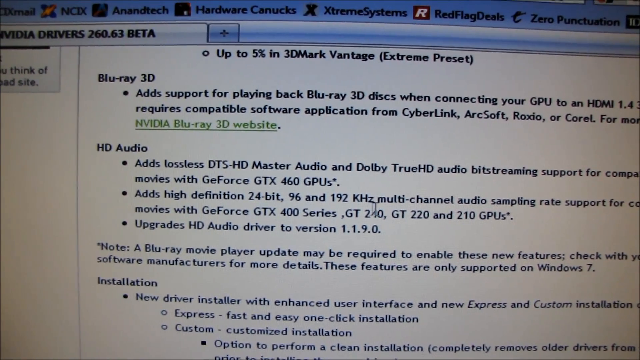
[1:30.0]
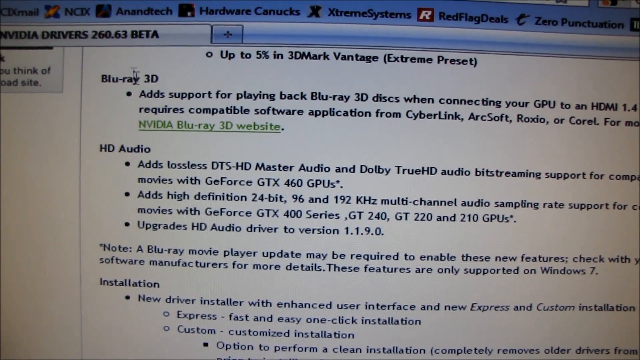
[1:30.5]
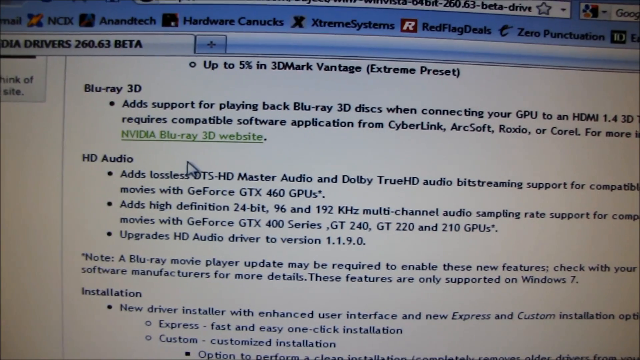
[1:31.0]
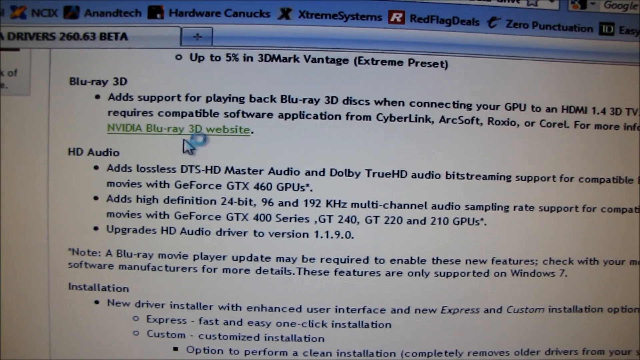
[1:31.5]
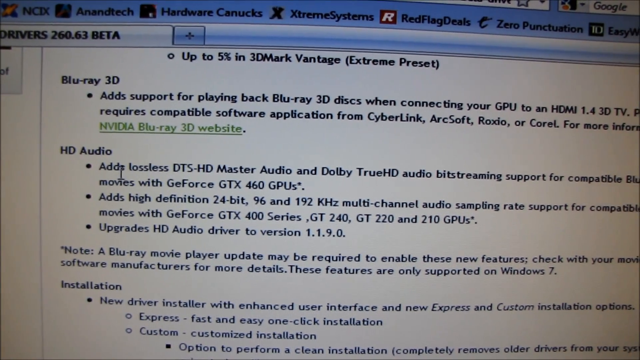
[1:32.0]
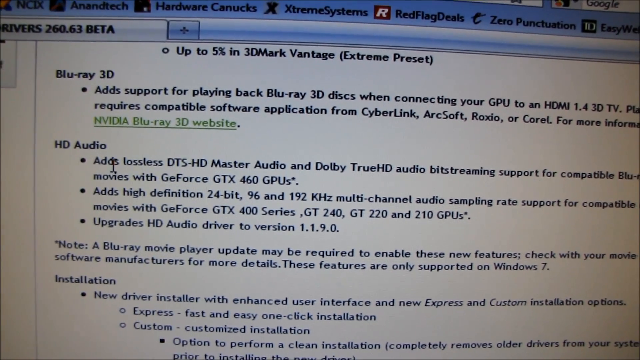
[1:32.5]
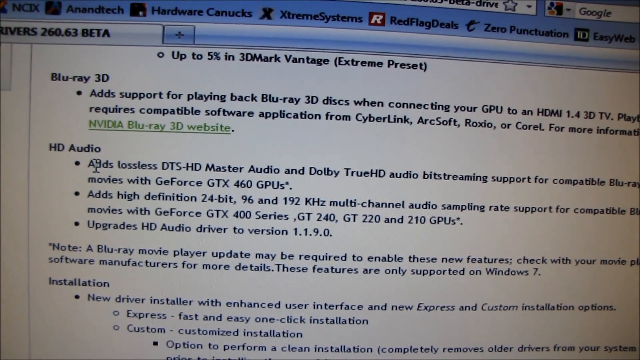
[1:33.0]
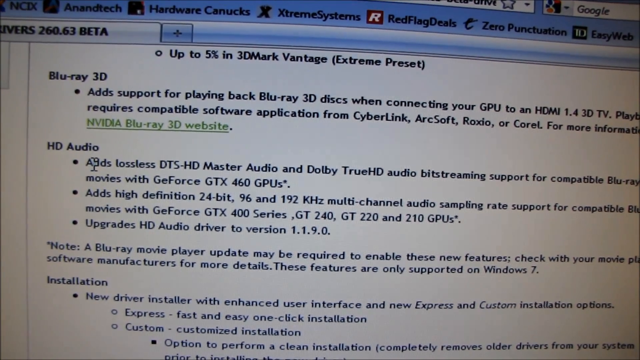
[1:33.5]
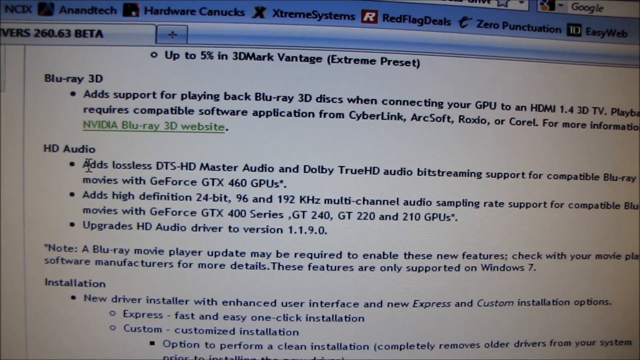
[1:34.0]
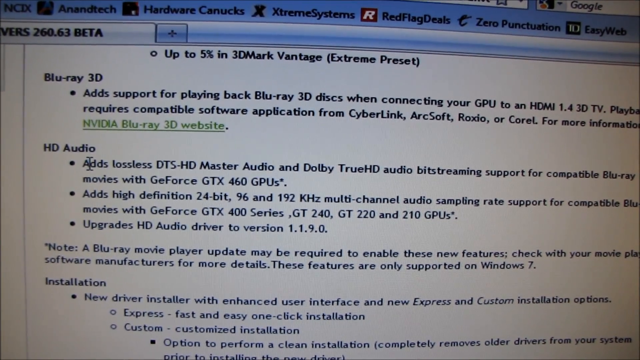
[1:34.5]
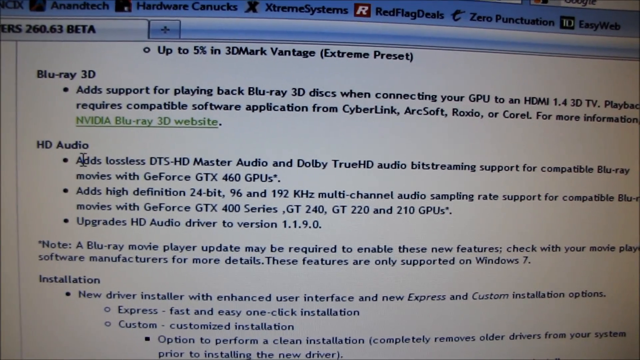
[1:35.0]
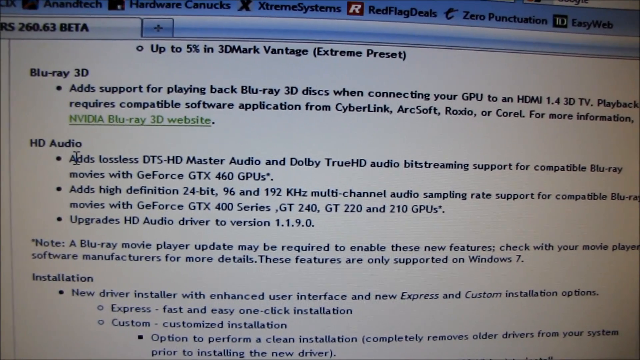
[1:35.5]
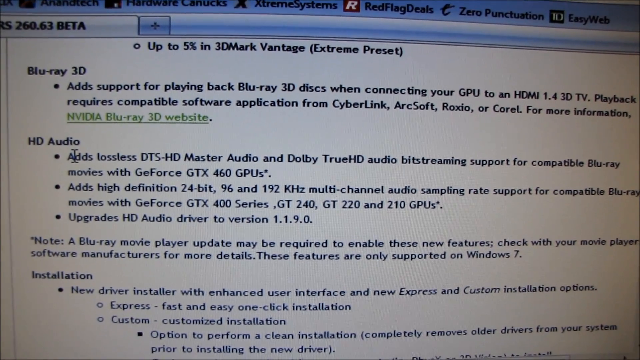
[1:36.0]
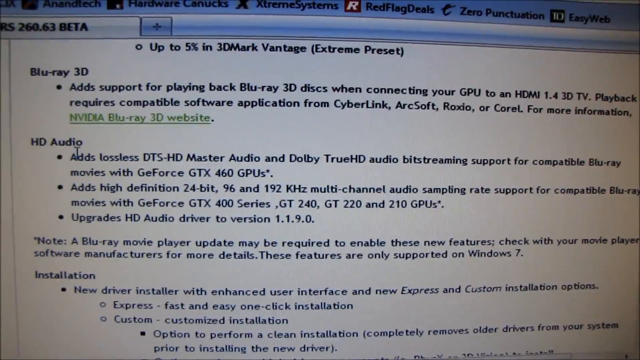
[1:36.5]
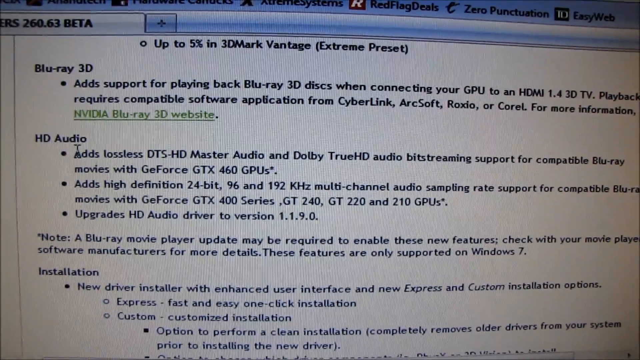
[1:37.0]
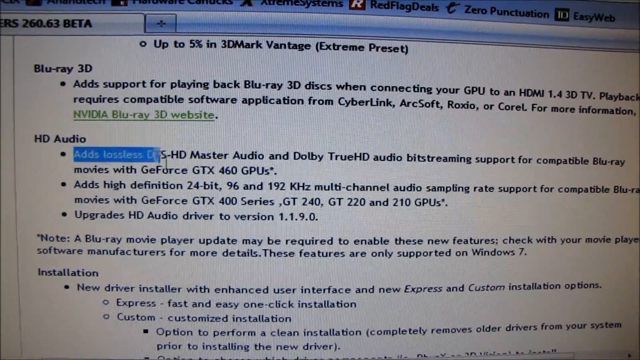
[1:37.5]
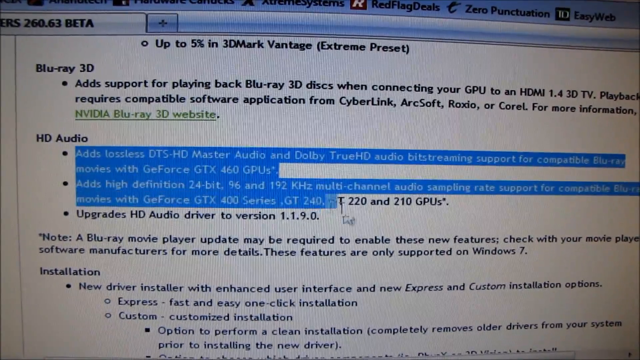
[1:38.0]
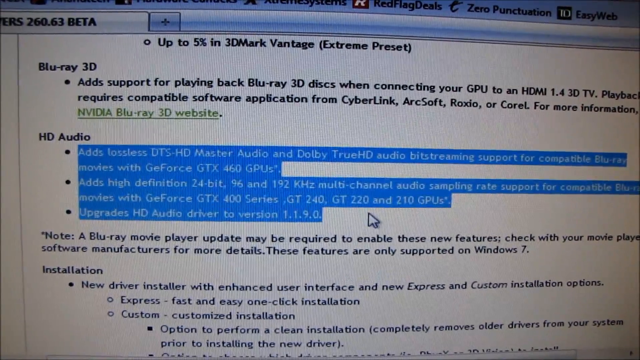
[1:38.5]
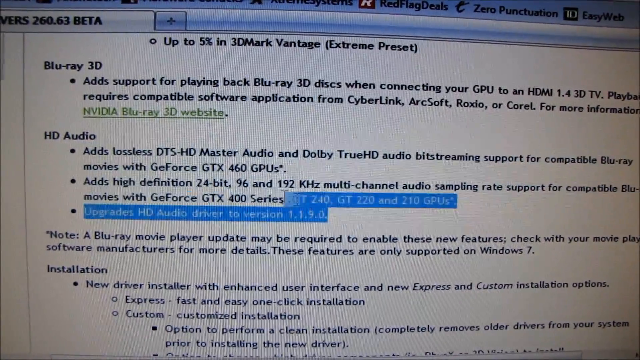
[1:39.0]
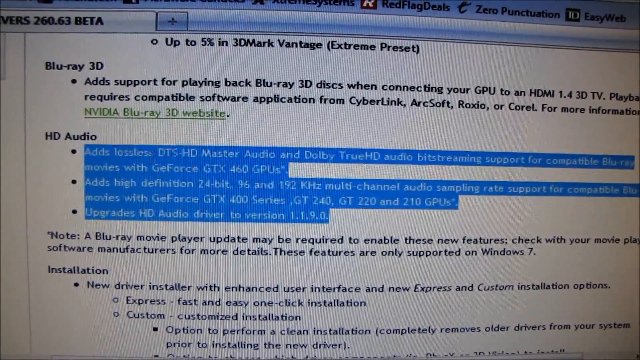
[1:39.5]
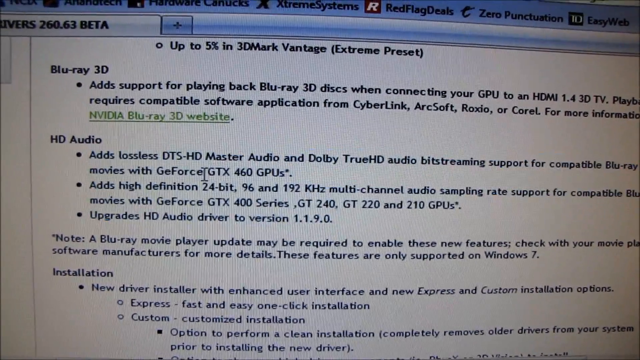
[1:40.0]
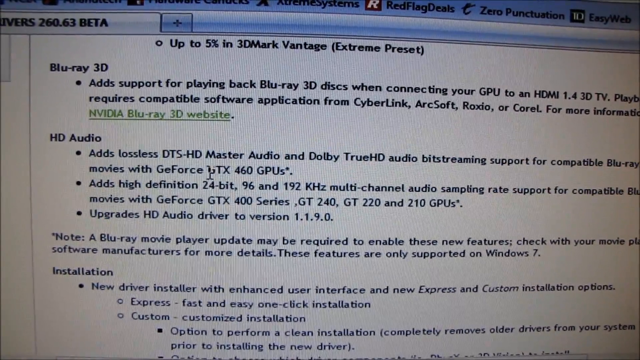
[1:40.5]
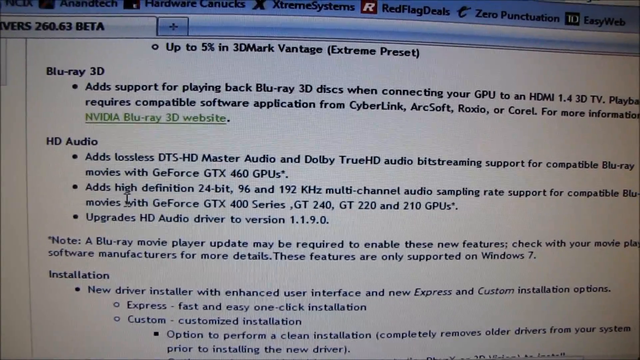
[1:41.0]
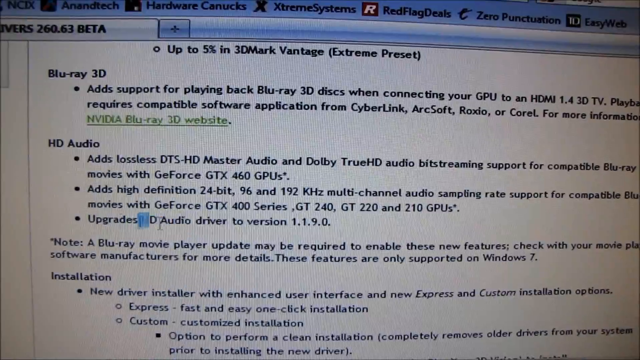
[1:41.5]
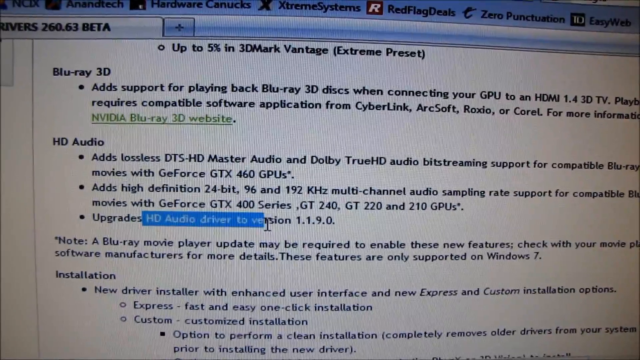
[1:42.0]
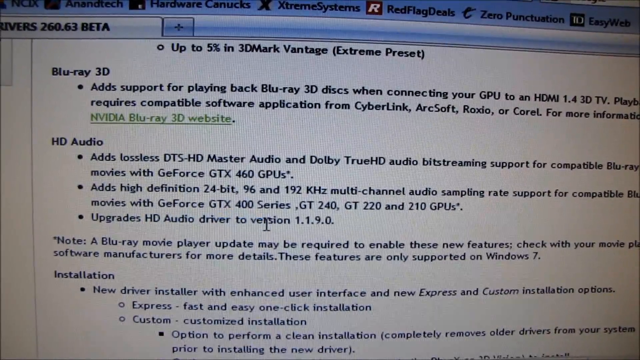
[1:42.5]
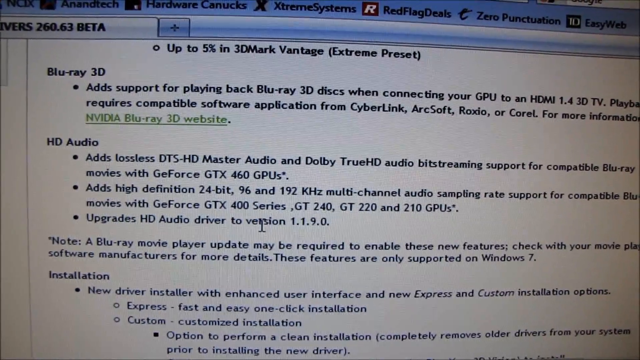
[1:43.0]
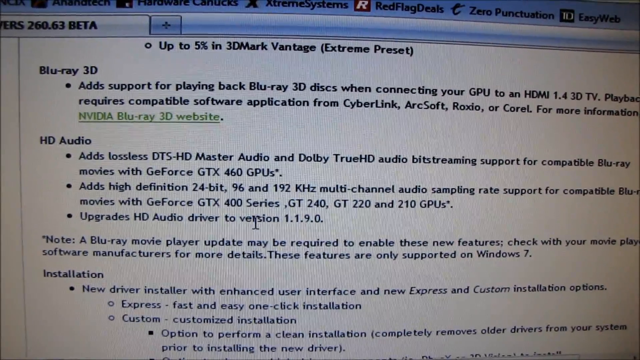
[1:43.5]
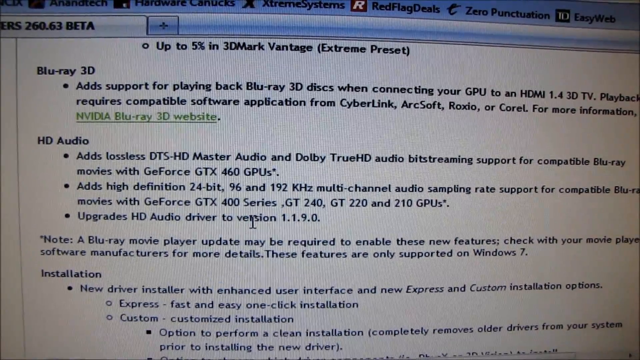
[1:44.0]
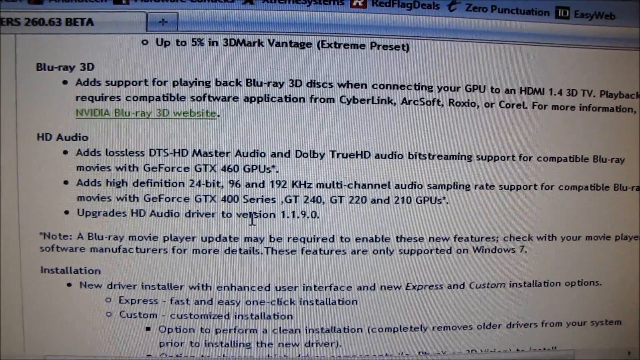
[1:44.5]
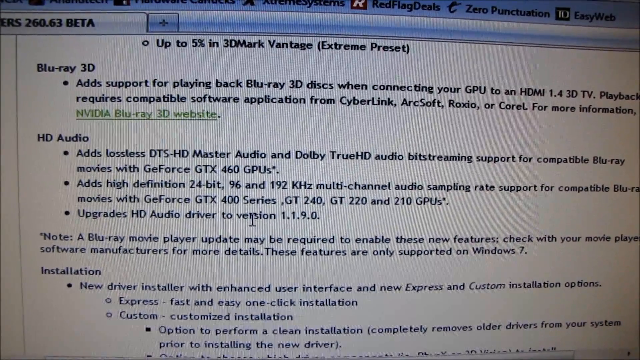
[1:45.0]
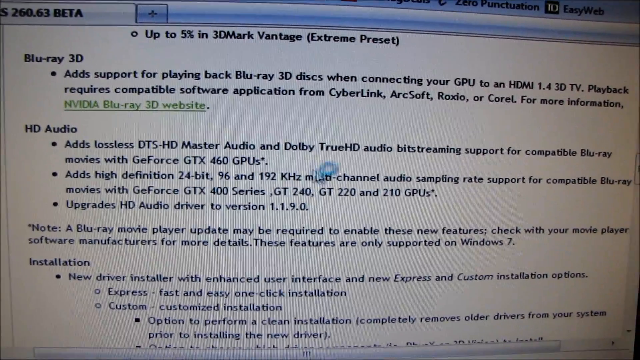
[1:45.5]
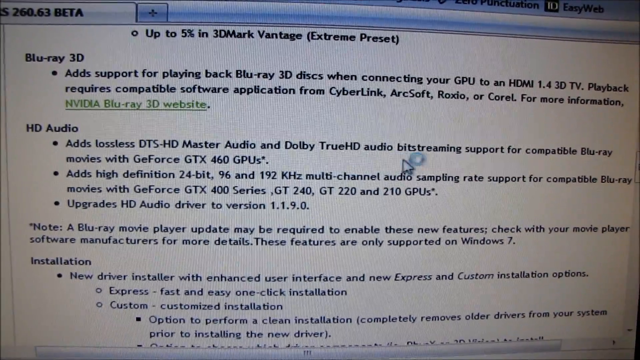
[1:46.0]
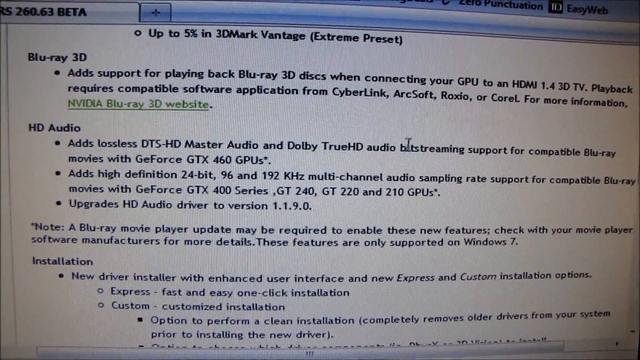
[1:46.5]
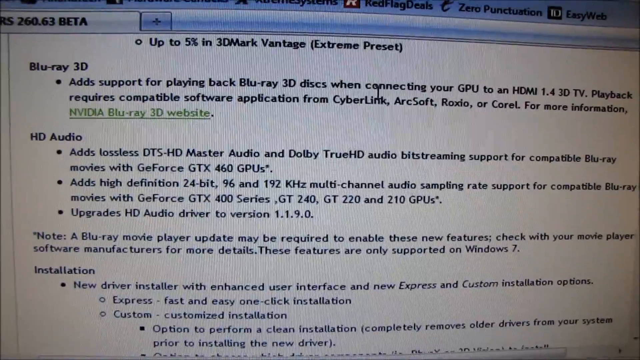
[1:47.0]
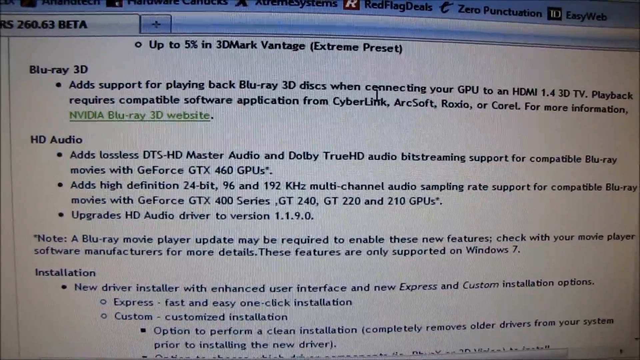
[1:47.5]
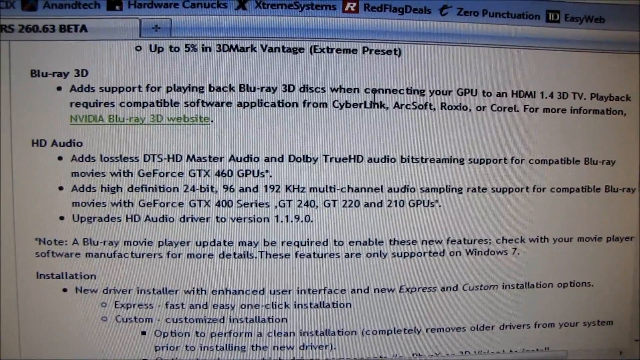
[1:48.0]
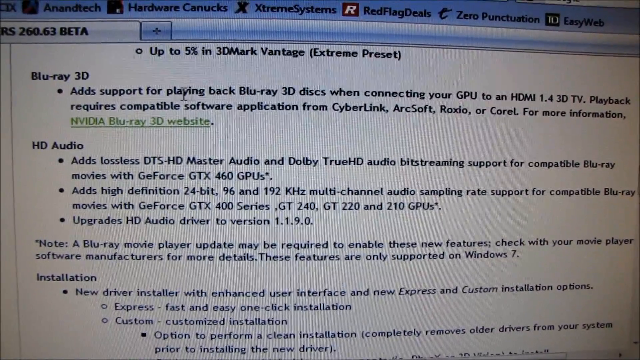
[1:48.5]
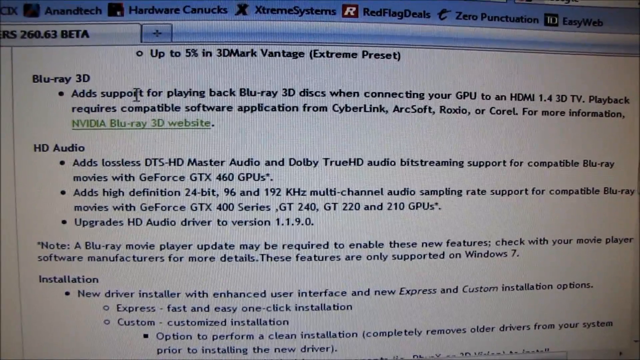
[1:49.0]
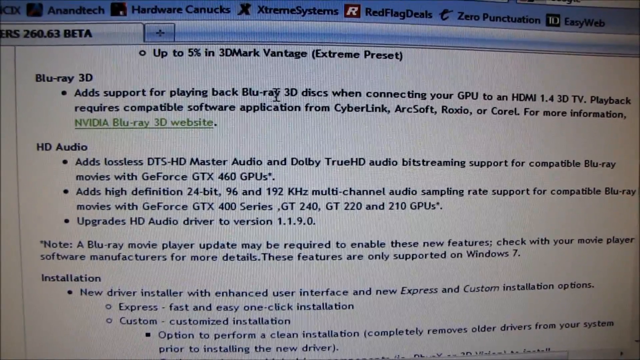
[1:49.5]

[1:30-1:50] The user remains on the text-heavy website; the browser tab is titled "NVIDIA drivers 260.63 beta". He seems to focus on a section titled "HD audio" with three bullet points underneath it. He hovers the cursor over the first bullet point, then highlights all three, selecting the text from top to bottom, unhighlighting it, and highlighting it again from bottom to top. He then moves to the third bullet point and highlights the text "HD audio driver 2 version 1.1.9.0". At least twice, a little circle pops up next to the mouse cursor, indicating the computer is busy.